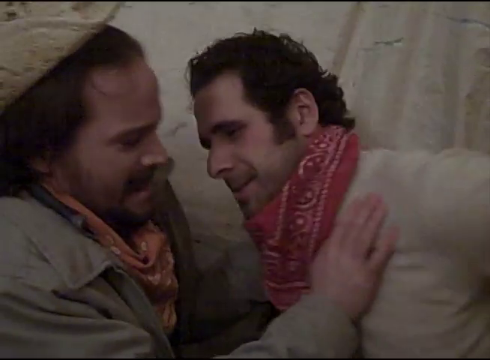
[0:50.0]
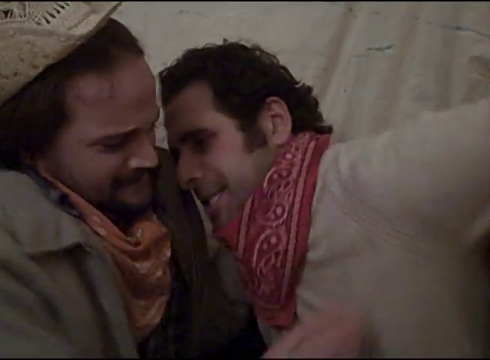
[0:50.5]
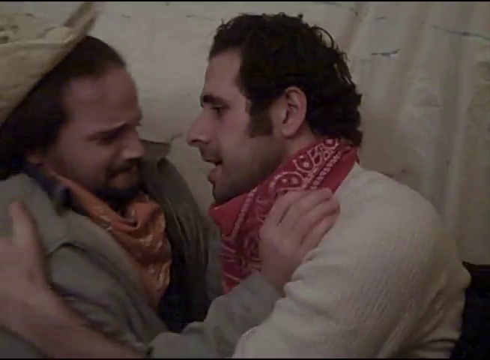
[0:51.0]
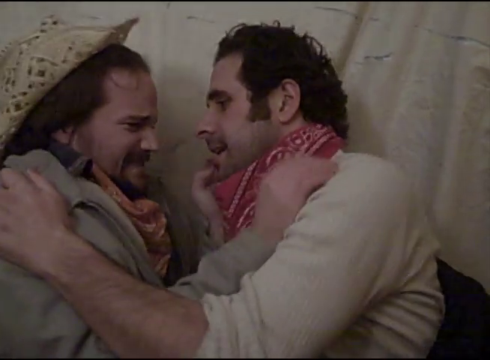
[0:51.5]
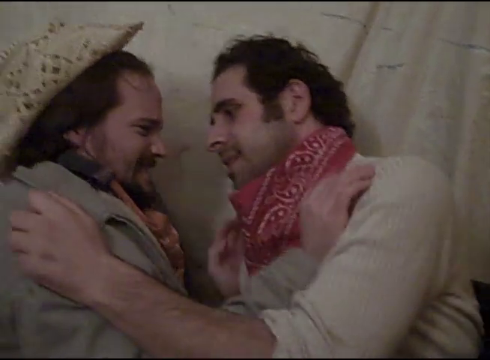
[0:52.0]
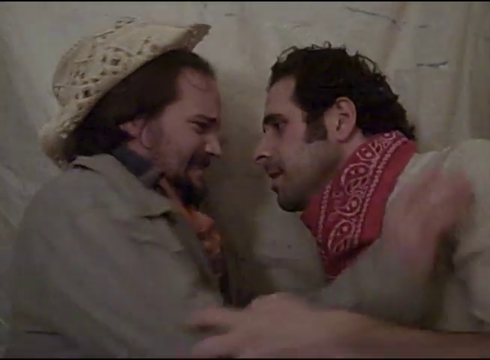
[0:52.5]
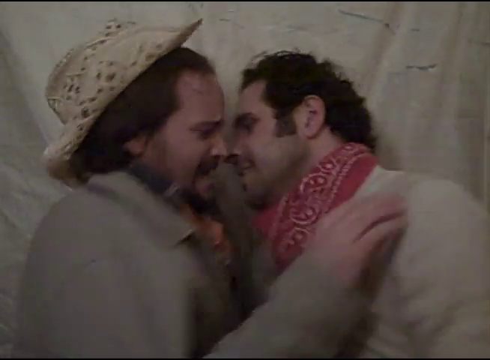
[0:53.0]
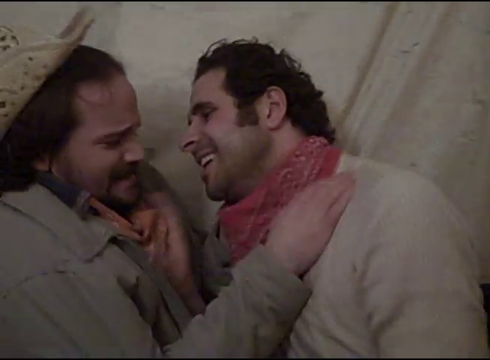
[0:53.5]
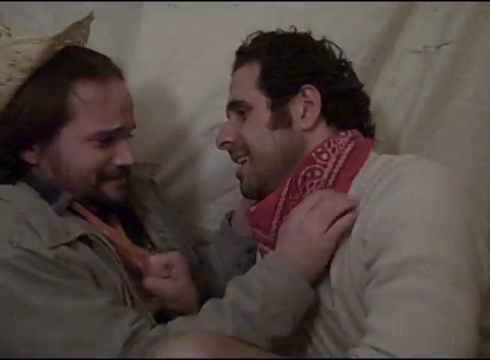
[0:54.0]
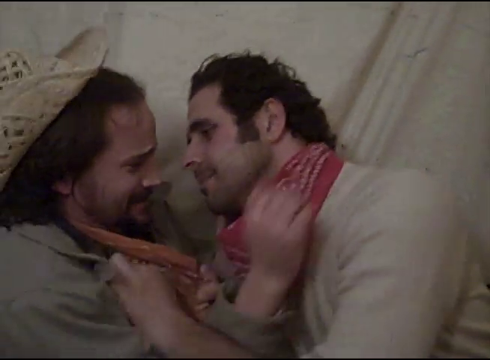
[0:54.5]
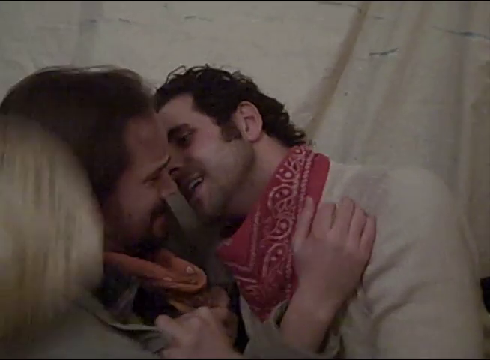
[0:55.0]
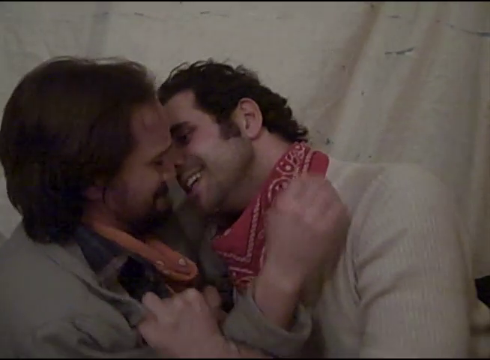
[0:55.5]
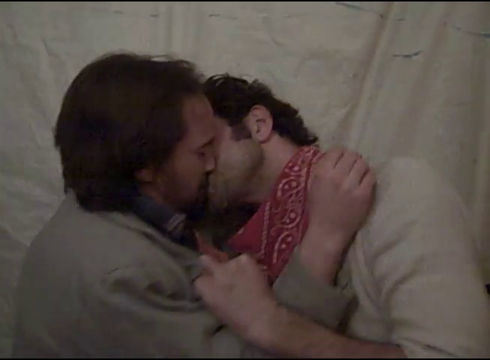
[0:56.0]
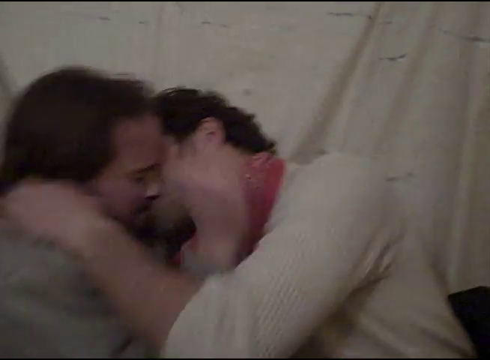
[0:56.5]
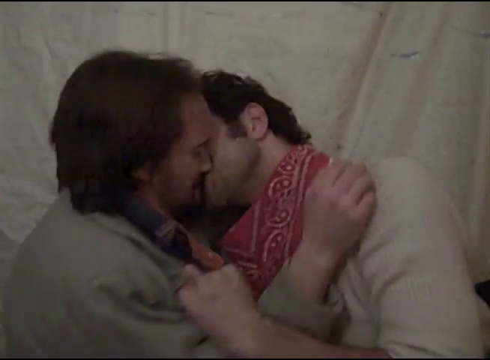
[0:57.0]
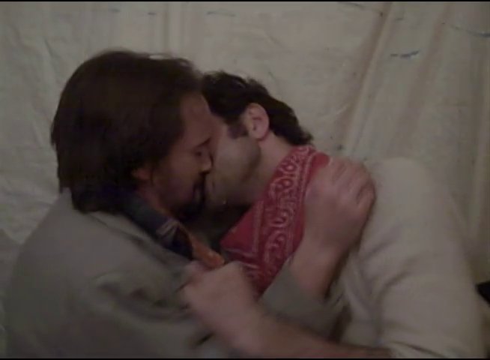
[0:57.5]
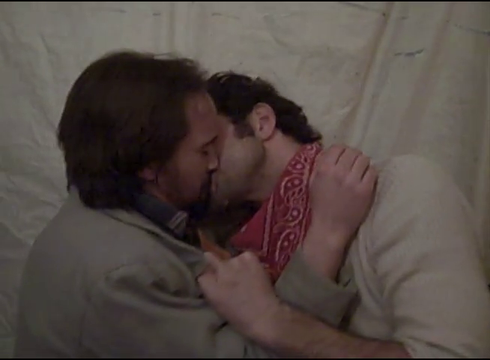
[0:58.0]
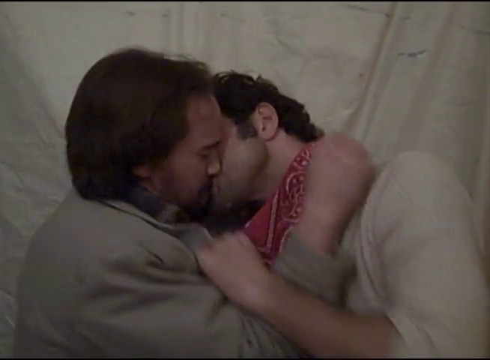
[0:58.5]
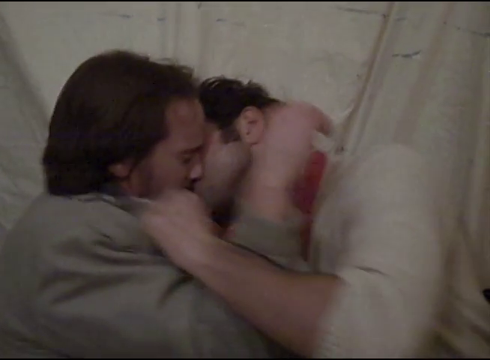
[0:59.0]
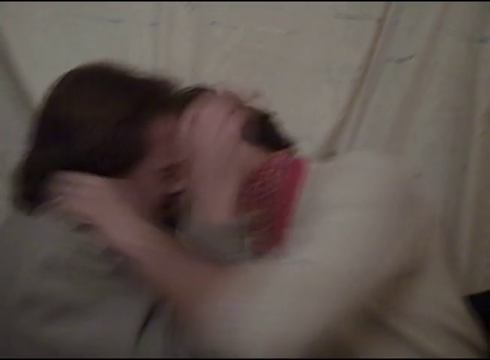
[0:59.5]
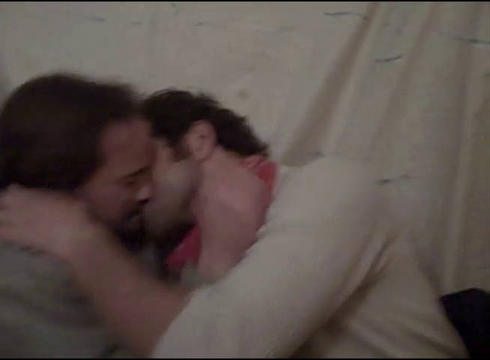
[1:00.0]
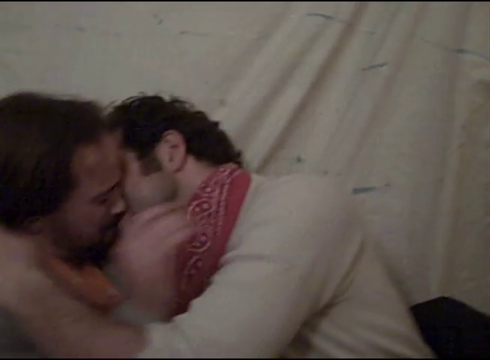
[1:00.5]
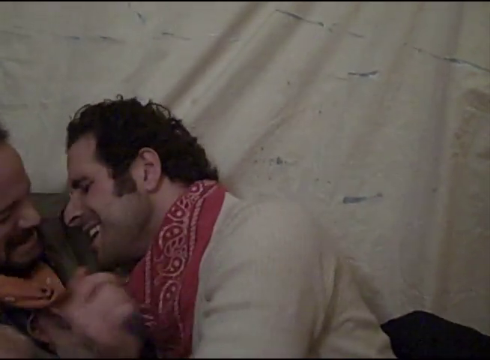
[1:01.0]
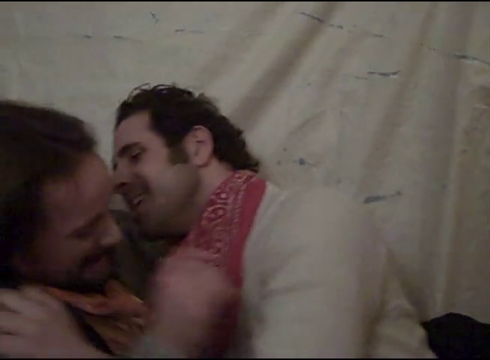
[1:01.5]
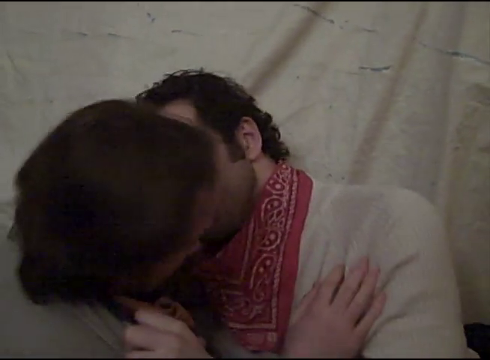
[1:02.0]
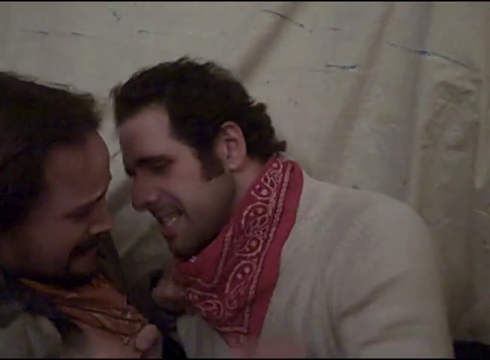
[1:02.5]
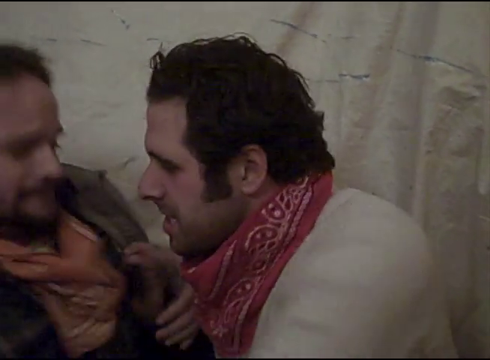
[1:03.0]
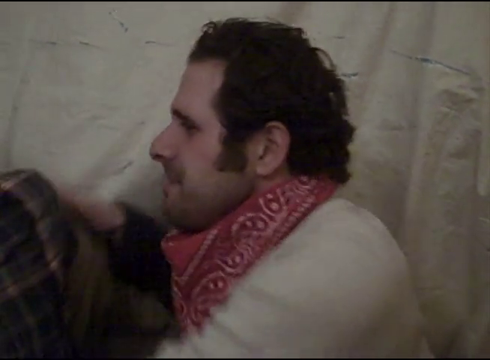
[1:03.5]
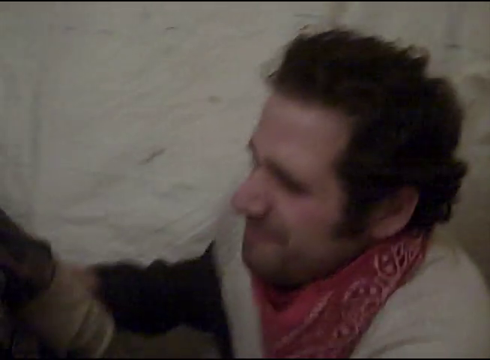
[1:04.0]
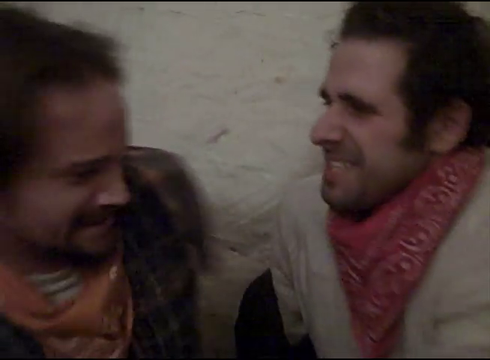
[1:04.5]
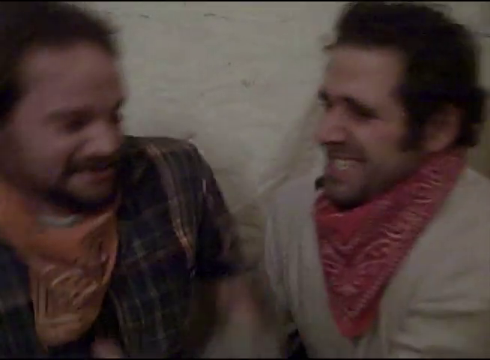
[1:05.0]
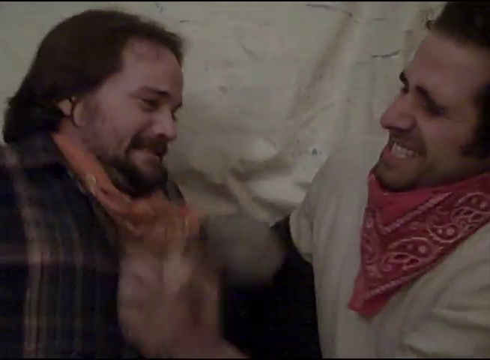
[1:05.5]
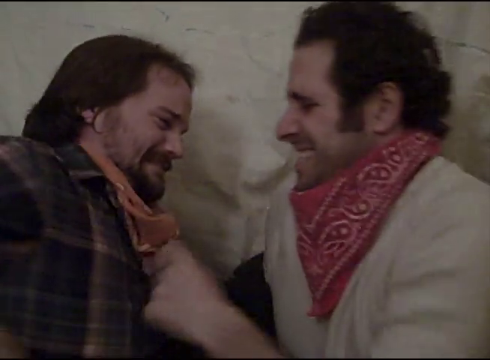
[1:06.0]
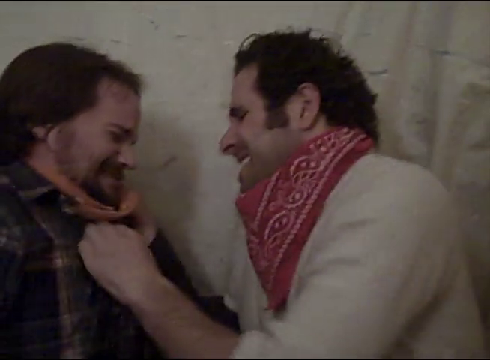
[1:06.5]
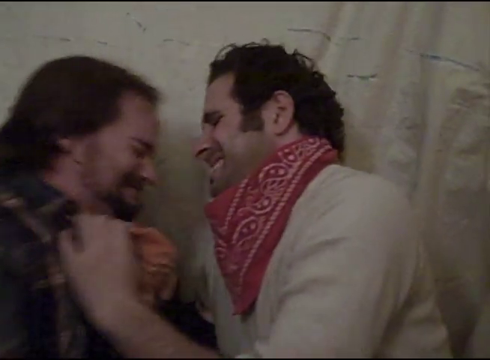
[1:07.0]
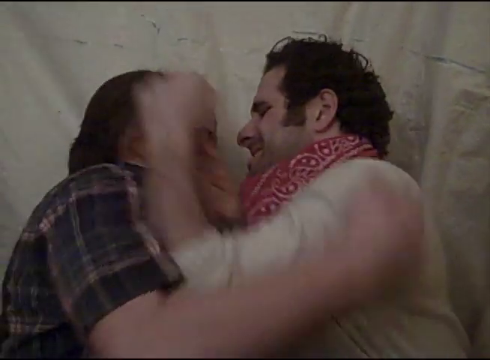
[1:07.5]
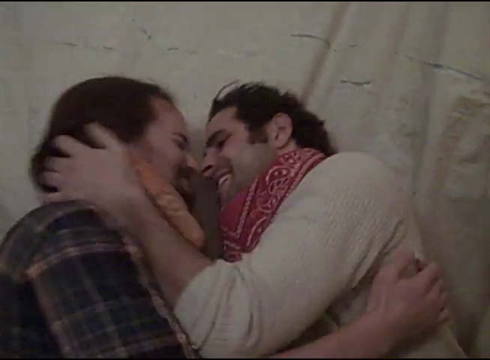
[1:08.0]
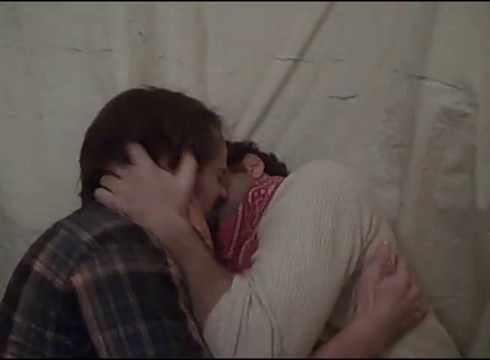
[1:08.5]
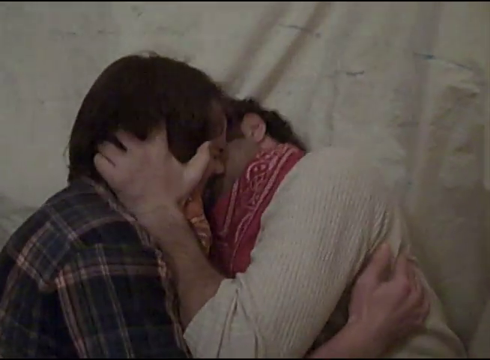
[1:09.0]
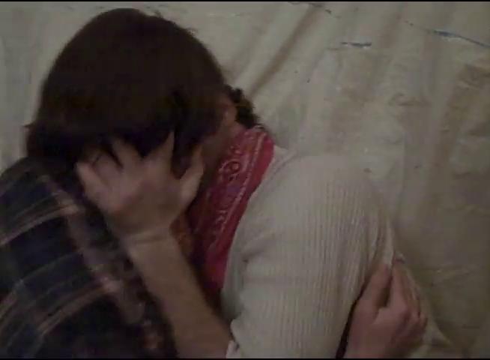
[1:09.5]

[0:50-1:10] In a parody of Brokeback Mountain, two actors play out a supposedly passionate scene but make it comedic. The man on the left, with a beard, a mustache, long brown hair to the base of his neck and a bandana around his neck, faces forward and holds the shoulder of the man on the right, whose hat is now off his head. This man, perhaps in his mid to late thirties, with dark brown curly hair and sideburns, is ripping the jacket off of him, exposing a white long-sleeve shirt underneath, as if getting ready for a sexual encounter; it is as if they are fighting the urge. The man on the right, his mouth open, comes in for a kiss, almost smiling and laughing, while the man on the left looks like he is nearly in tears, giggling, as they attempt to rip each other's clothes off in a passionate but funny scene.